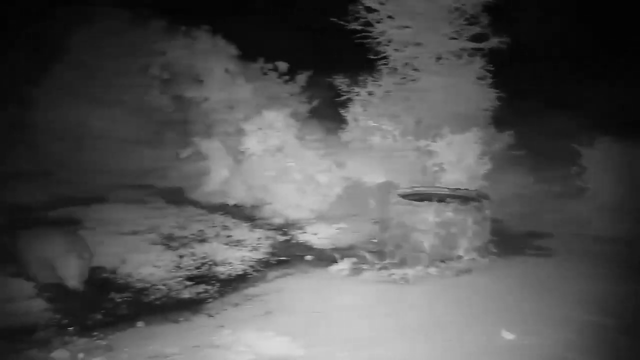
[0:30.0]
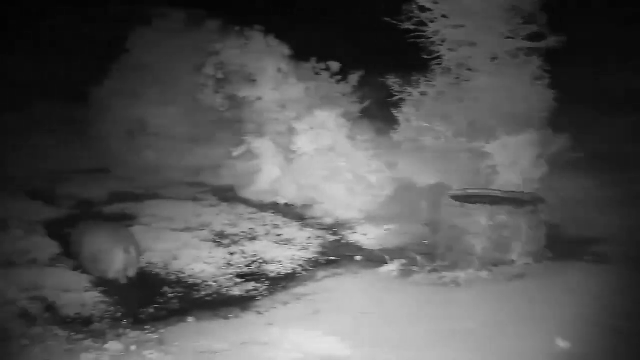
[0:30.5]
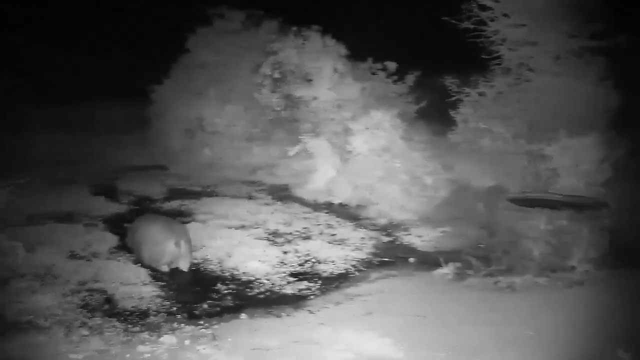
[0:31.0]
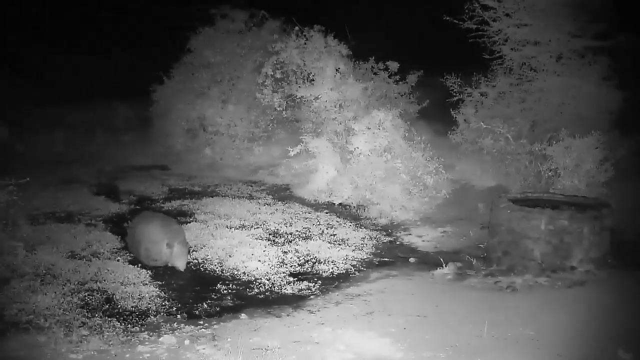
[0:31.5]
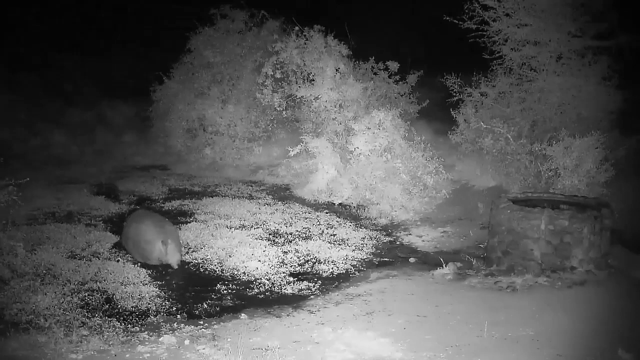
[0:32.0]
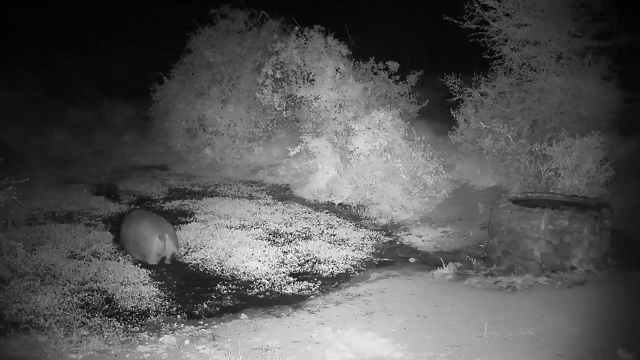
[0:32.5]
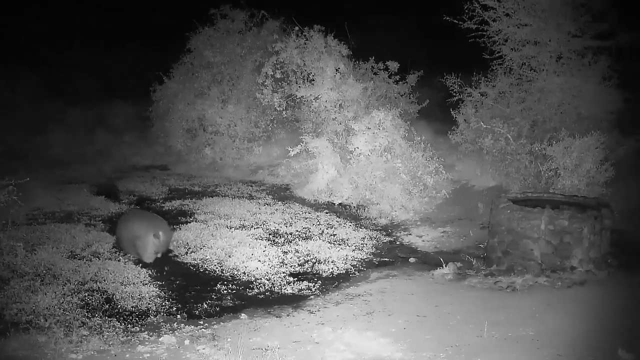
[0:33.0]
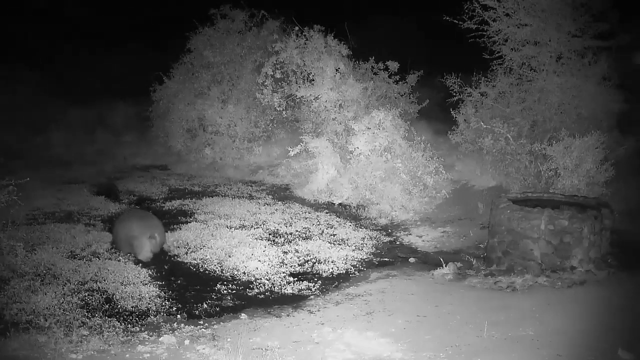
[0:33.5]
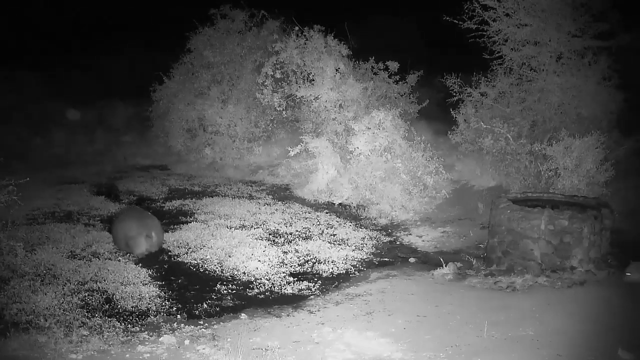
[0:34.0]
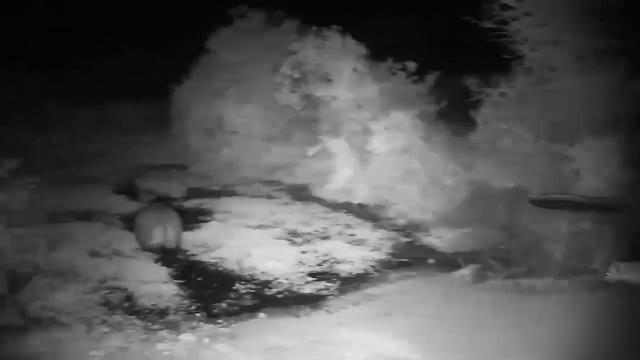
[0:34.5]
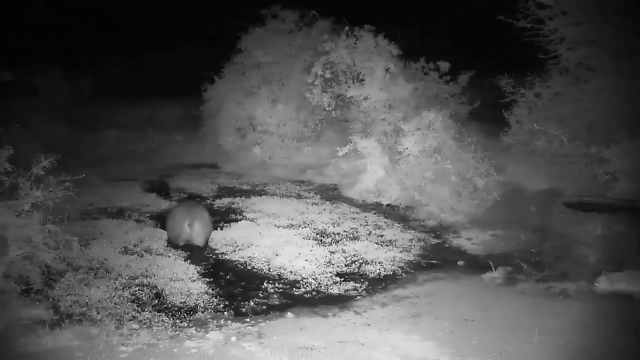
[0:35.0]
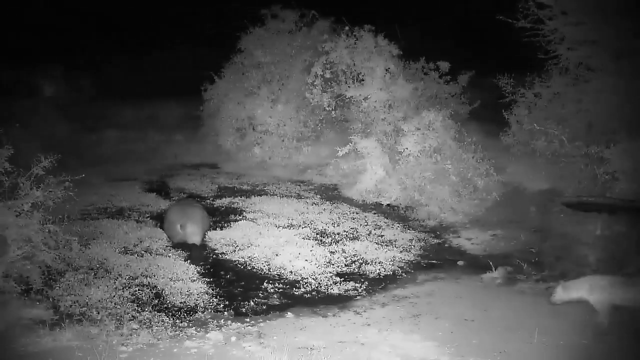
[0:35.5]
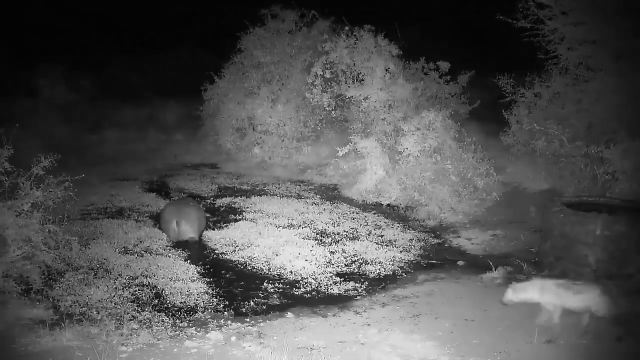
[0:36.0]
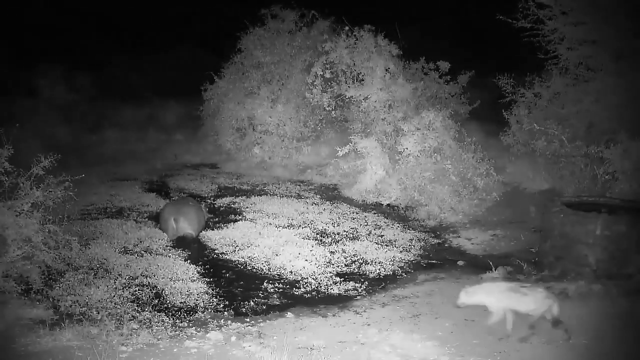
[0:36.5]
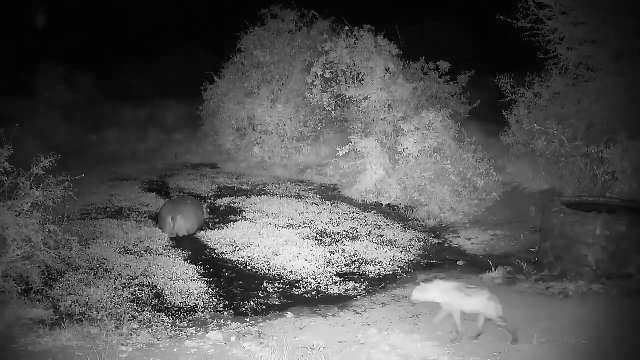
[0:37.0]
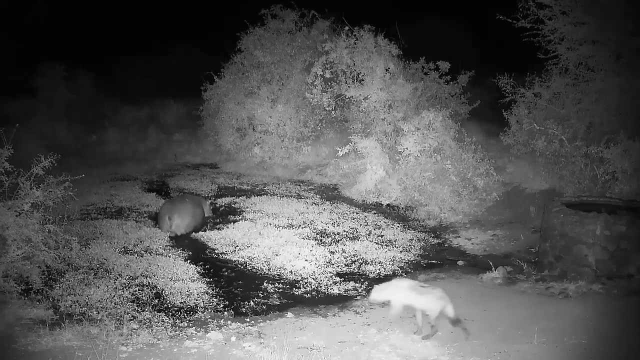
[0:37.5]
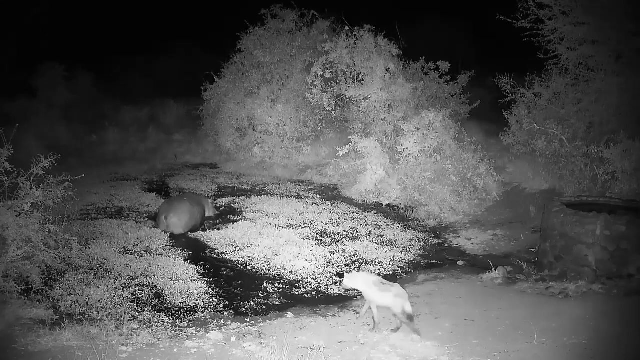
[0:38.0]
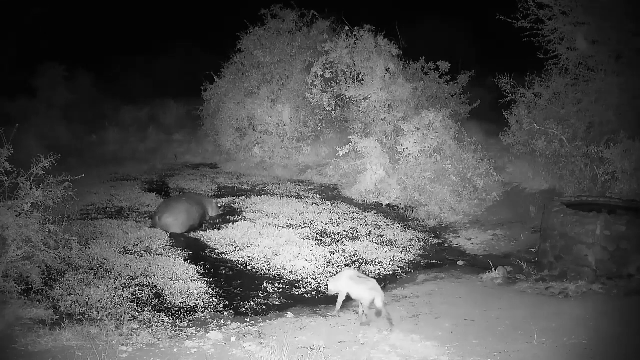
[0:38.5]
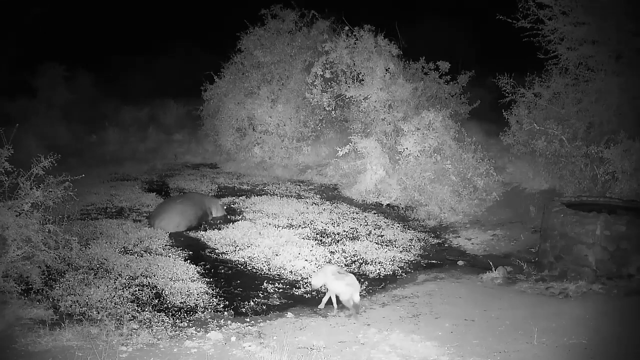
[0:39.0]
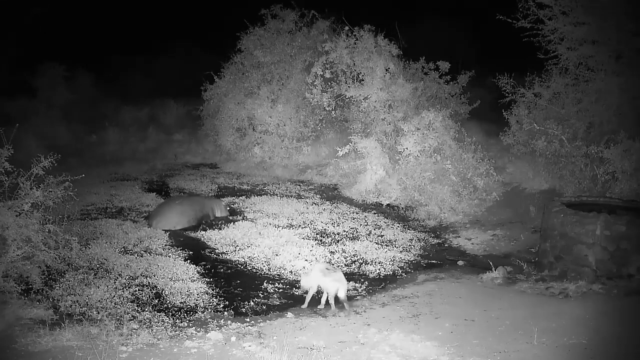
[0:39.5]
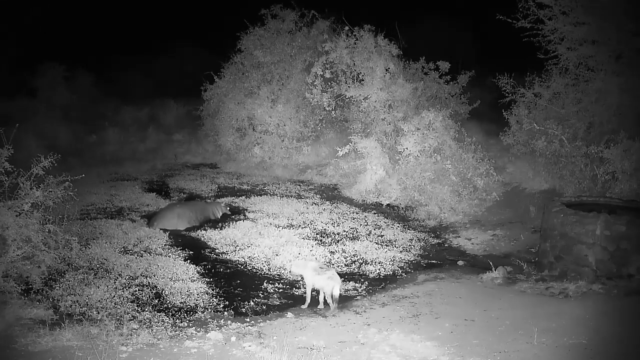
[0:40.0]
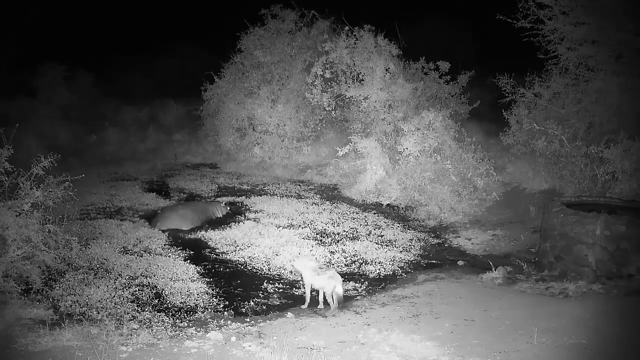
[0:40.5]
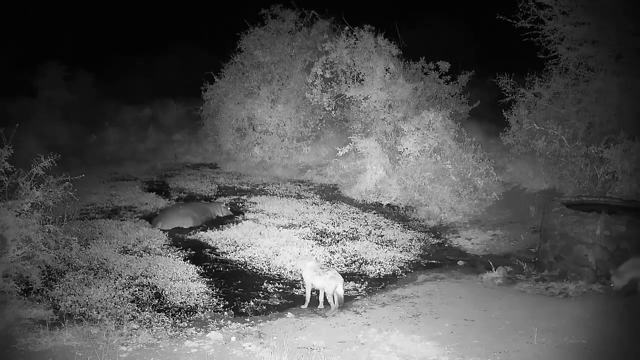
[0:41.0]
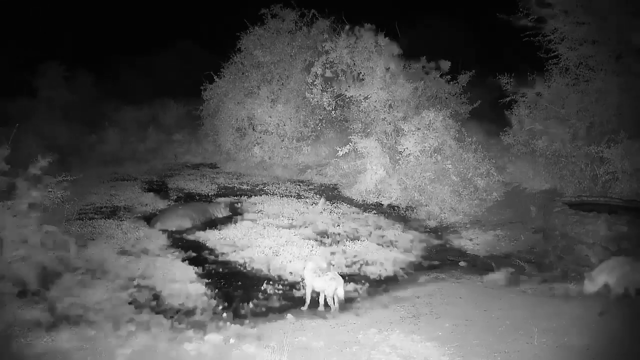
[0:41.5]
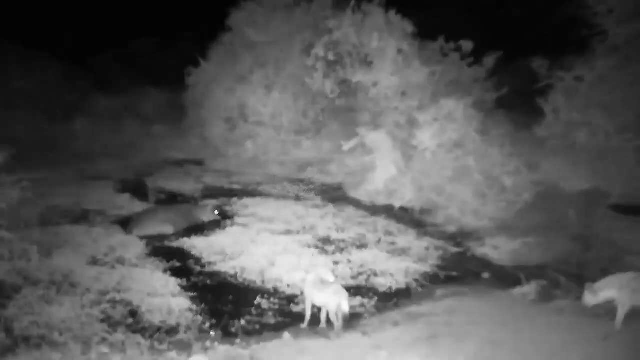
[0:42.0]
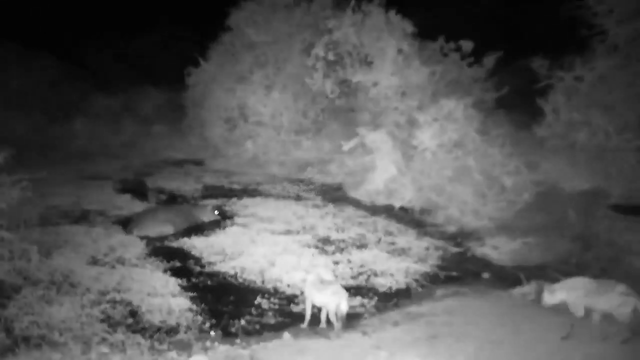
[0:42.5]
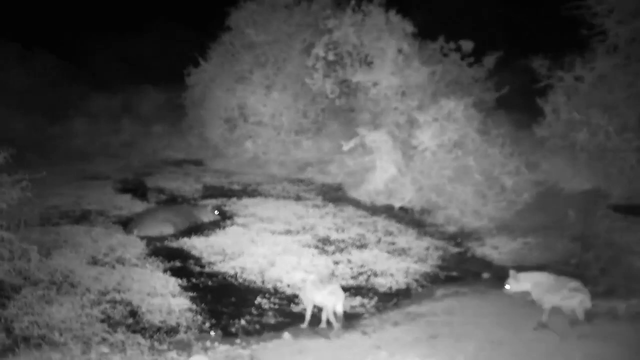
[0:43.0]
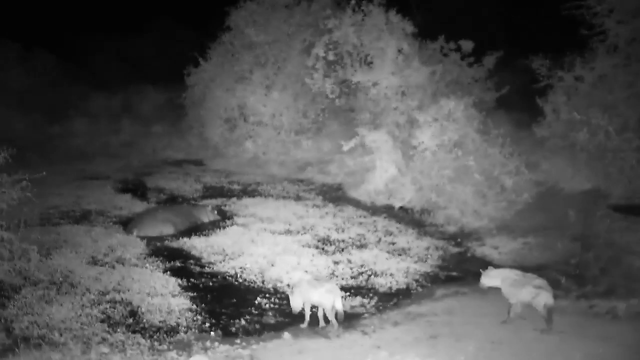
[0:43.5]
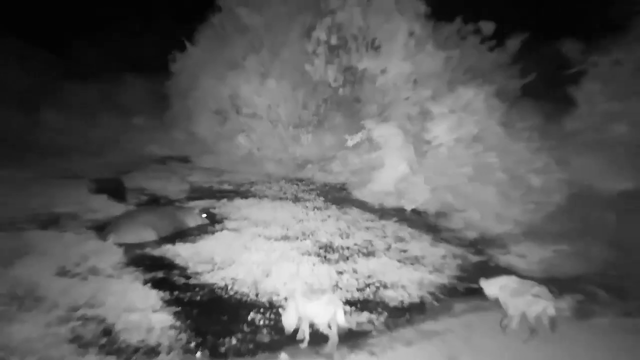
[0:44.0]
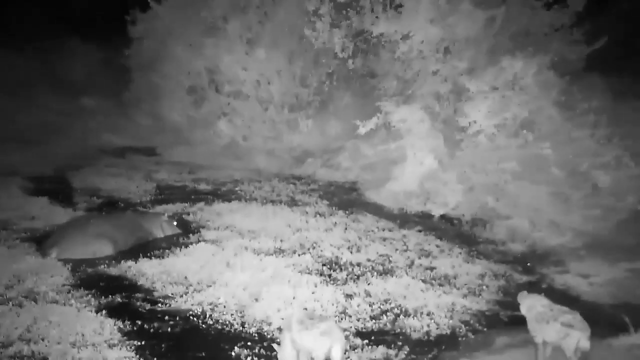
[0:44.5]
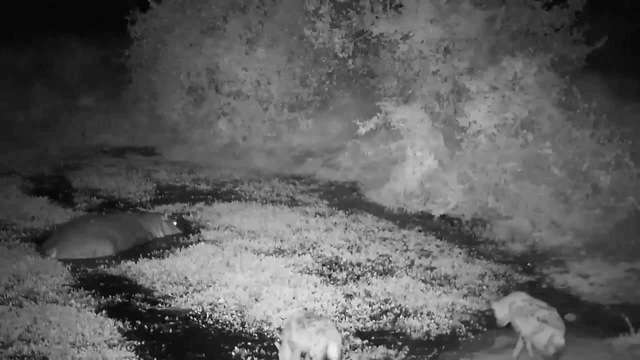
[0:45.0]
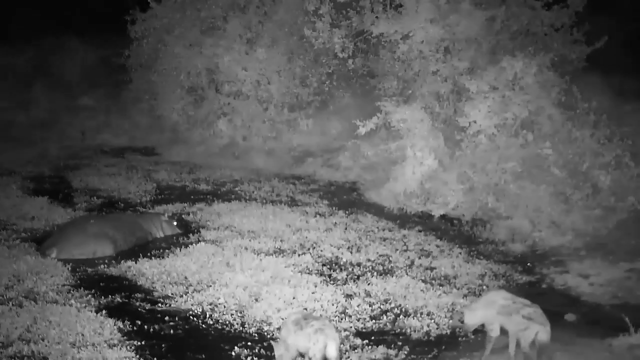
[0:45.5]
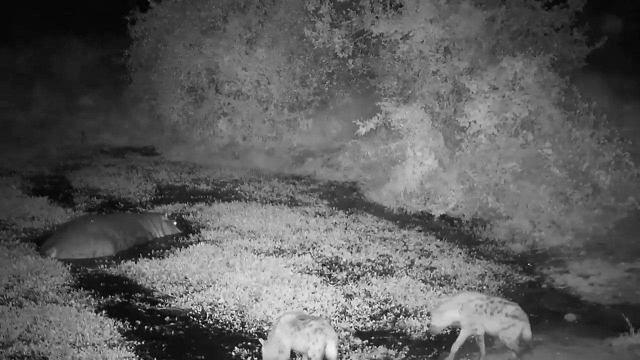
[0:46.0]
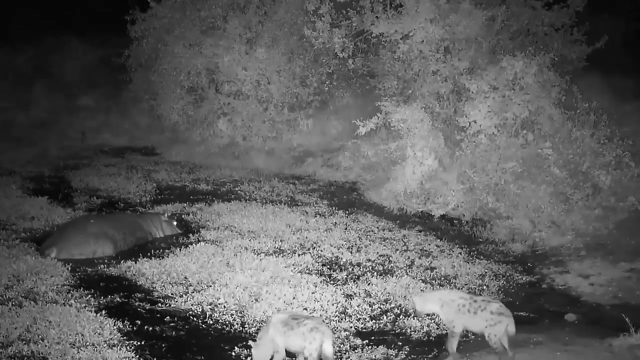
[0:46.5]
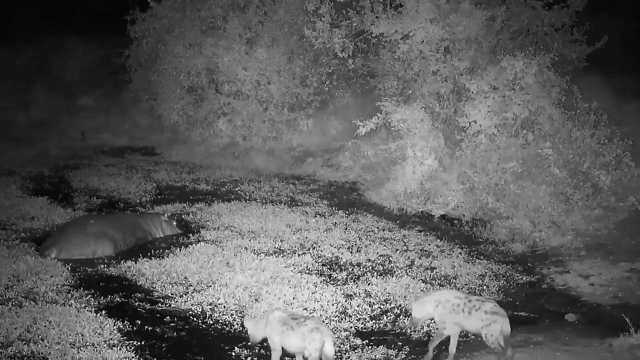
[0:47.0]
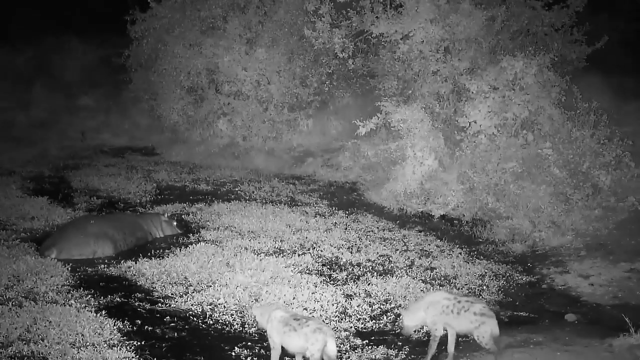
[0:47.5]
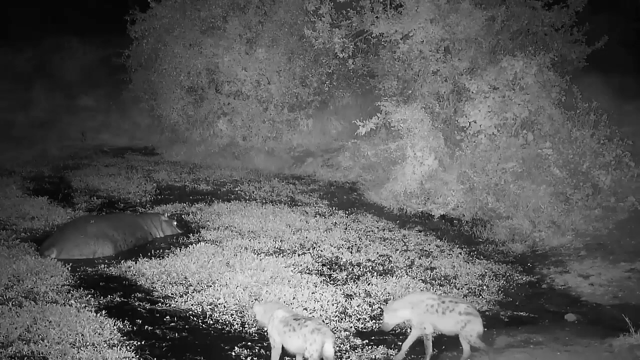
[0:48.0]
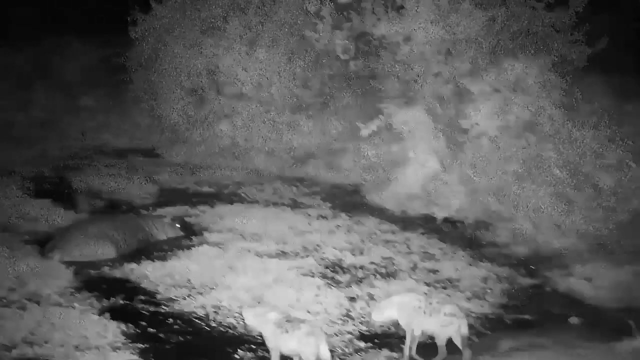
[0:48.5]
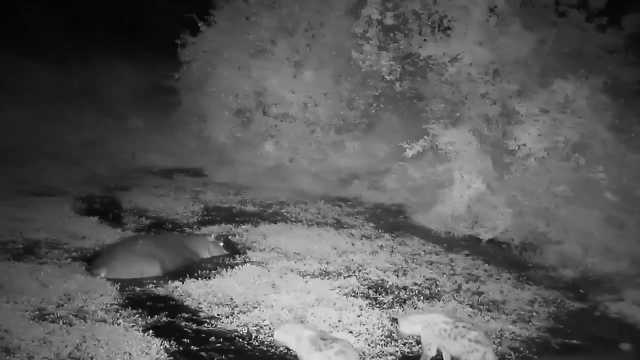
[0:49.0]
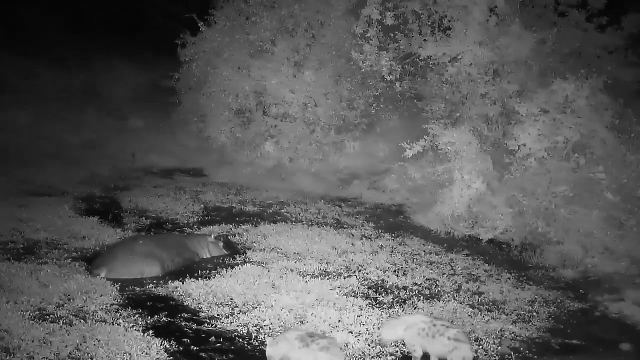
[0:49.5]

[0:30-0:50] The video is black and white, with a big light in the background. An animal moves around and the camera keeps following it. A tank full of water where the animals drink is visible, and the setting is apparently a zoo with forest. The hippo goes into a dirty place and into dirty water. Another animal that looks like a cheetah follows, and then there are three cheetahs and one hippo. The hippo sits in the dirty water, which looks black. It seems to be night, since only the area where the big light points is visible. Trees appear without color.